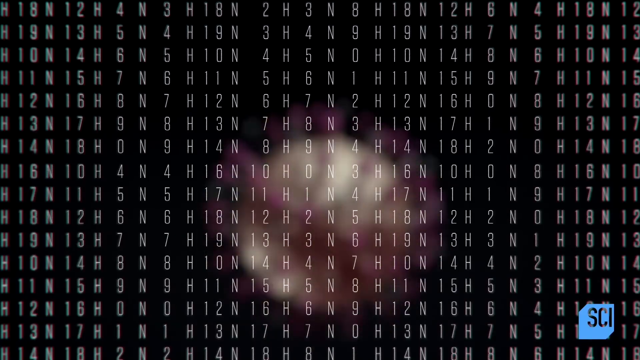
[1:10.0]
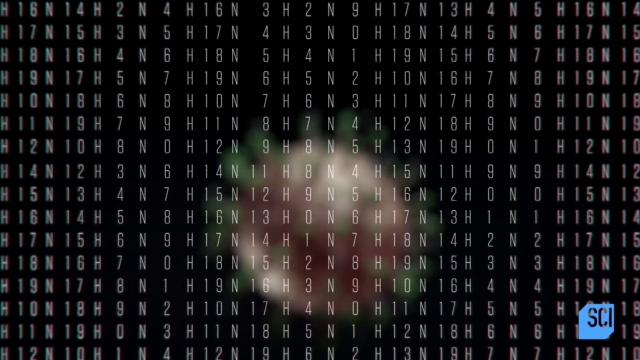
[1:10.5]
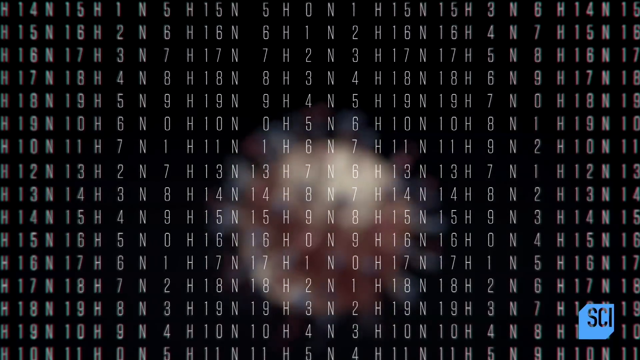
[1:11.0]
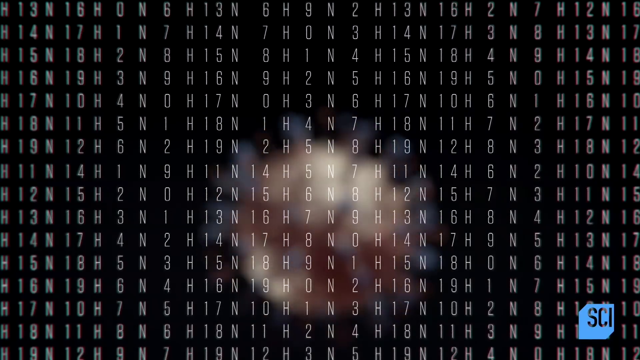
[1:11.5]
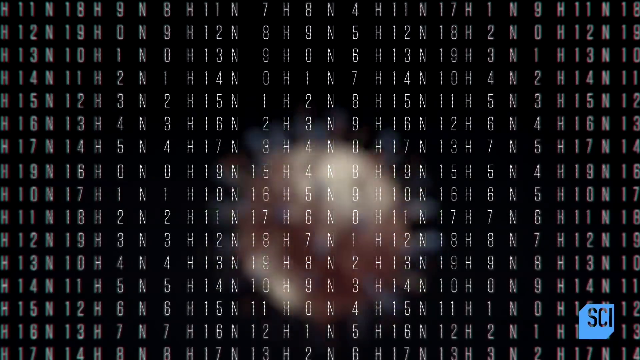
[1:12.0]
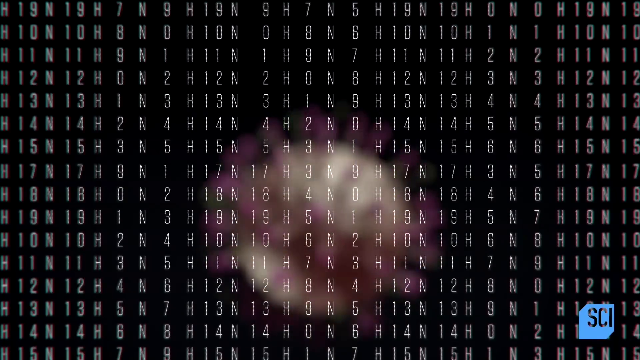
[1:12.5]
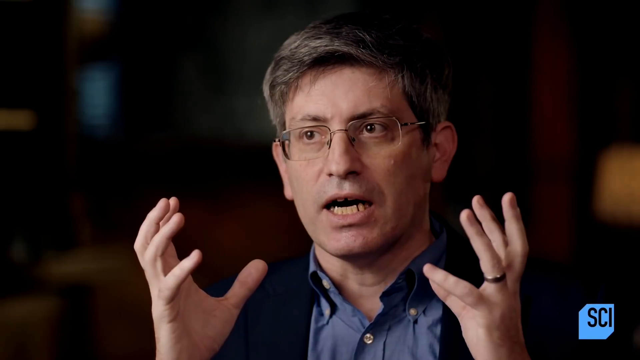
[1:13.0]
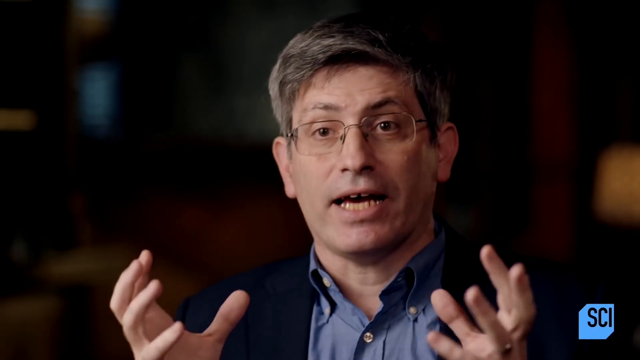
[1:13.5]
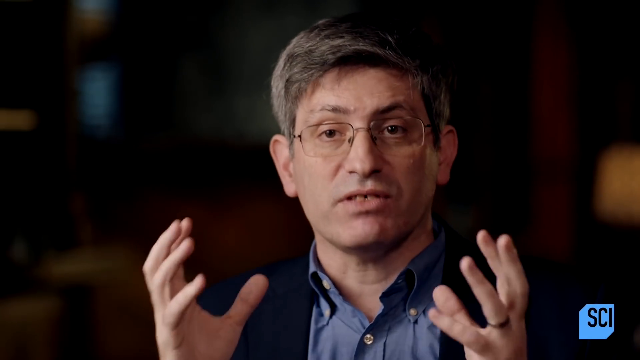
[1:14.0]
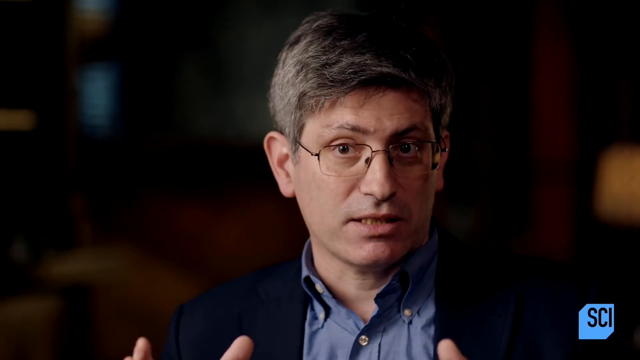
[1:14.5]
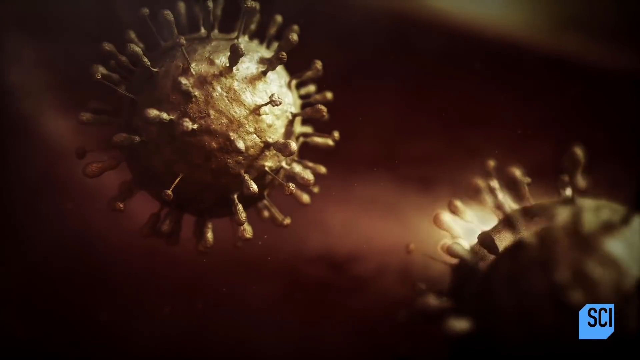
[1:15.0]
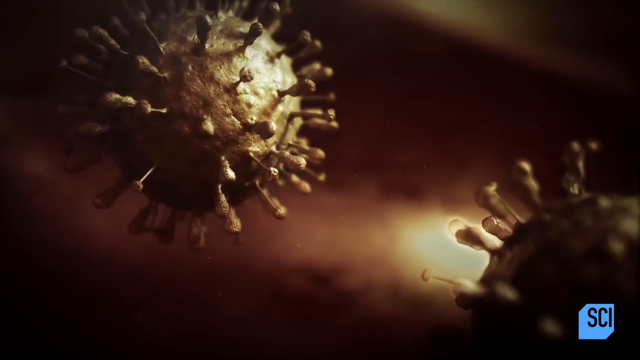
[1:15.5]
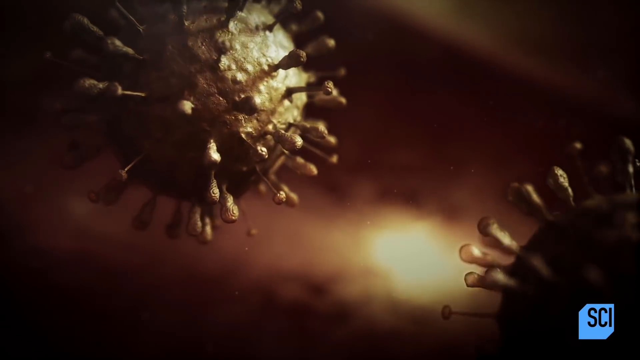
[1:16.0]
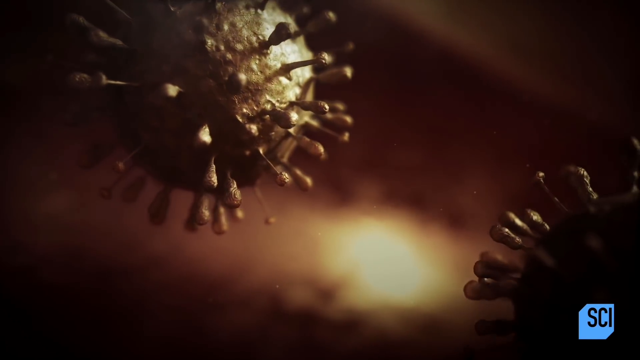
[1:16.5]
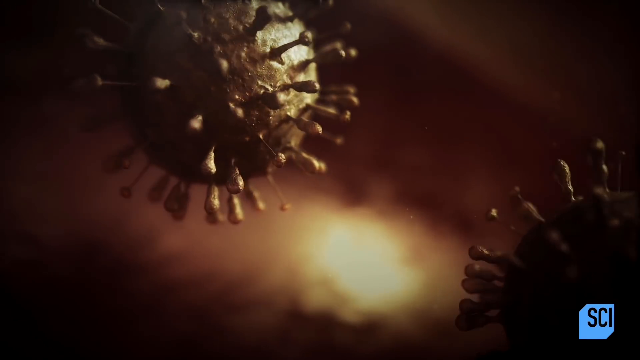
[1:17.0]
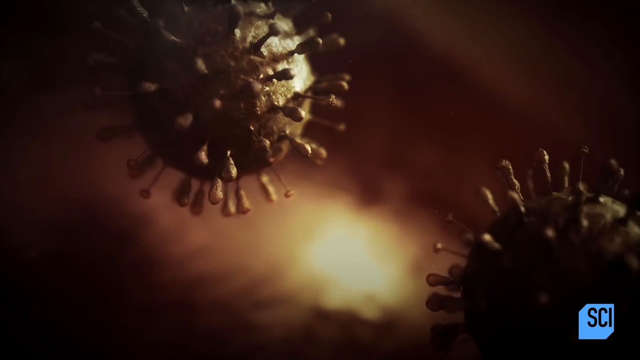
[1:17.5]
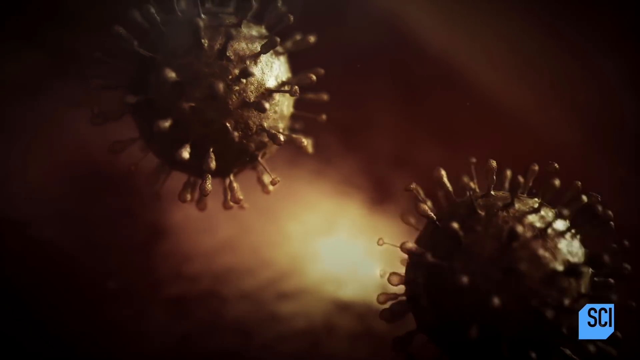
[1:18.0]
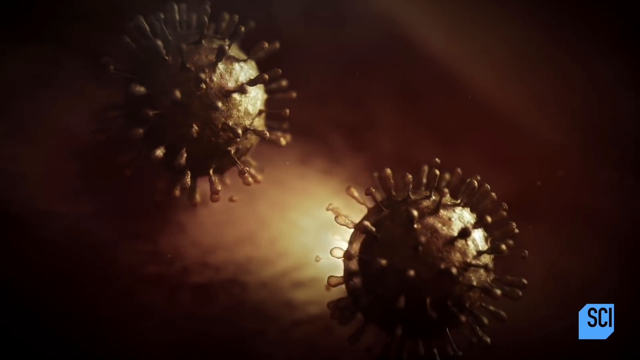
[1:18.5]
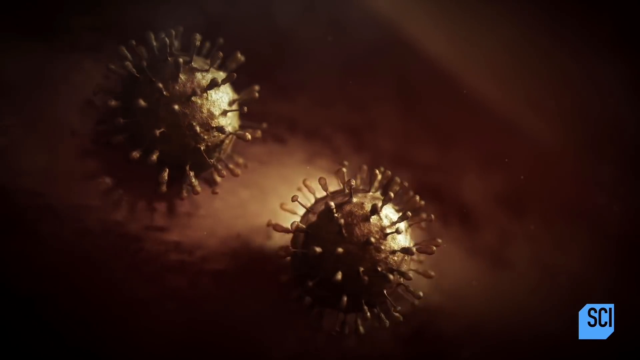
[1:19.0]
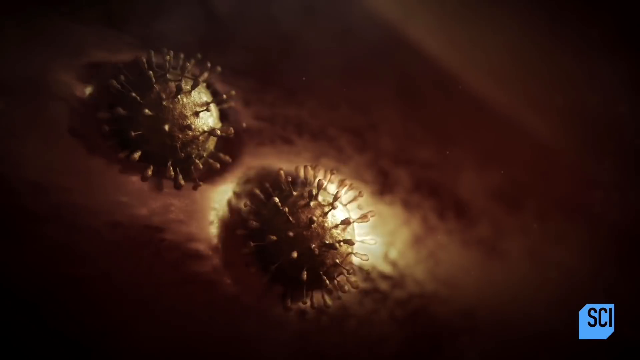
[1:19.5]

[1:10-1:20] Rows and columns of white letters and numbers appear against a black background, reading "H18N, 2H3N, BH1N" across the top and then up and down. Behind them, blurred out, is one of the globe-shaped objects with spikes, moving back and forth and changing rapidly as it does. The screen changes back to the man speaking to the screen, who has gray hair, wire-rimmed glasses, a black jacket and a blue shirt; he emphasizes what he is saying with his hands. The screen then changes to the gold objects with spikes moving through a gold background. They enter what looks like a gold river of plasma and begin to disappear within it.